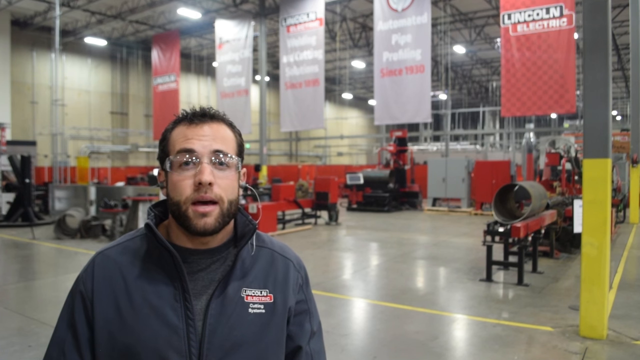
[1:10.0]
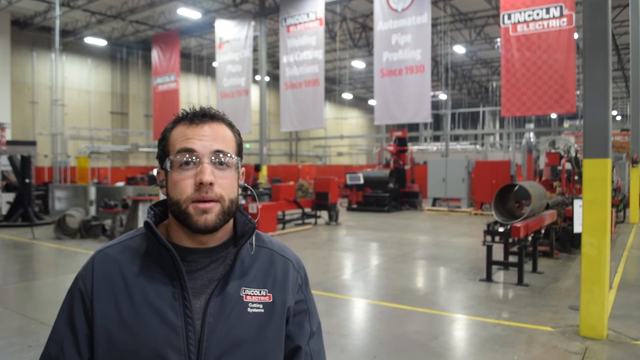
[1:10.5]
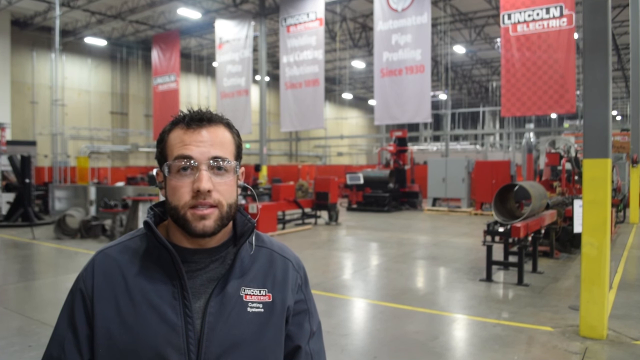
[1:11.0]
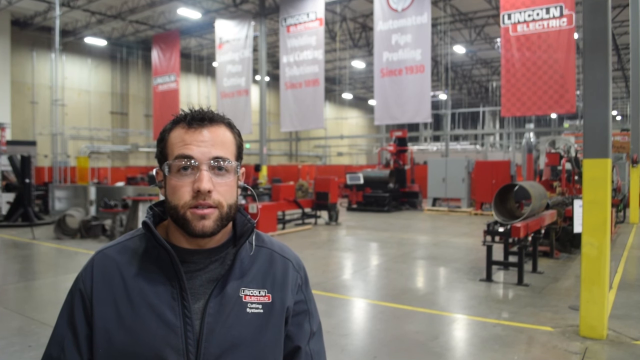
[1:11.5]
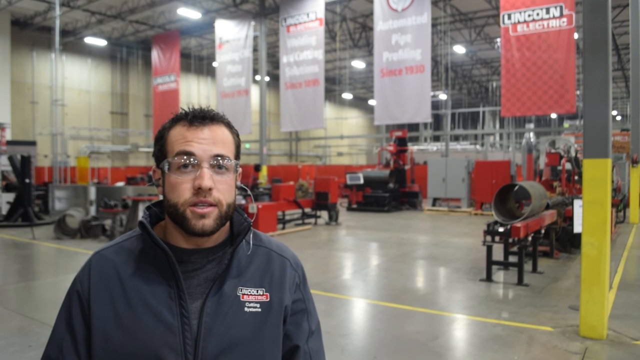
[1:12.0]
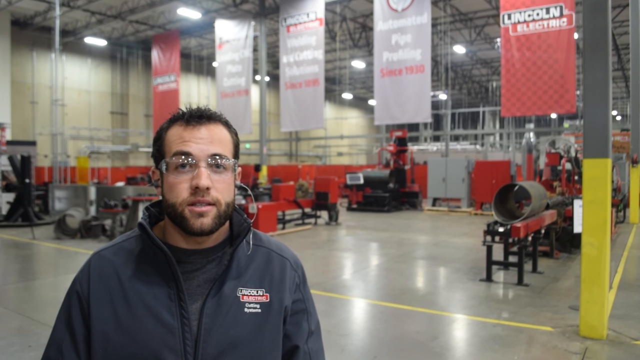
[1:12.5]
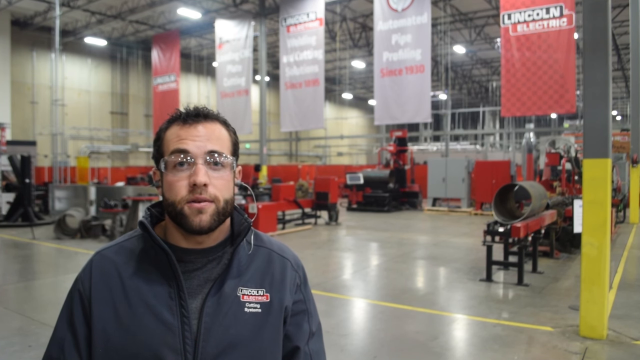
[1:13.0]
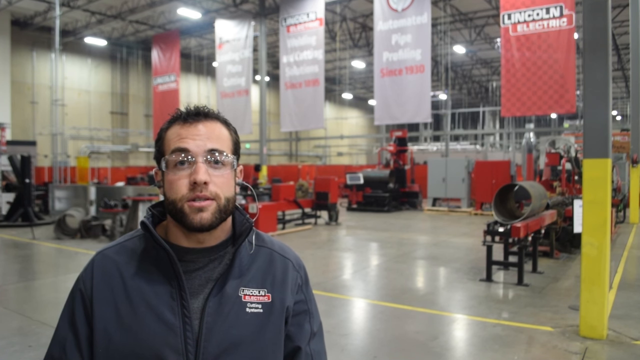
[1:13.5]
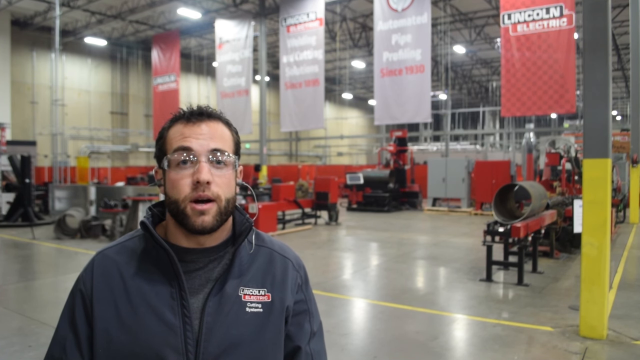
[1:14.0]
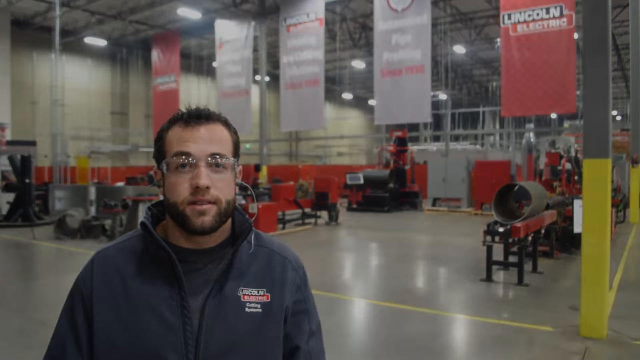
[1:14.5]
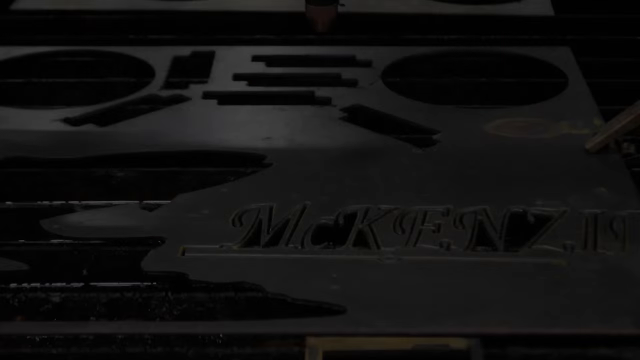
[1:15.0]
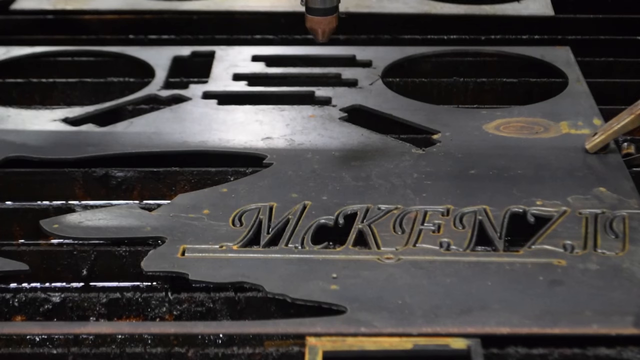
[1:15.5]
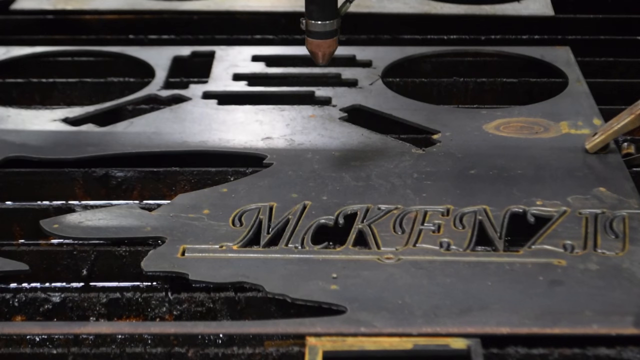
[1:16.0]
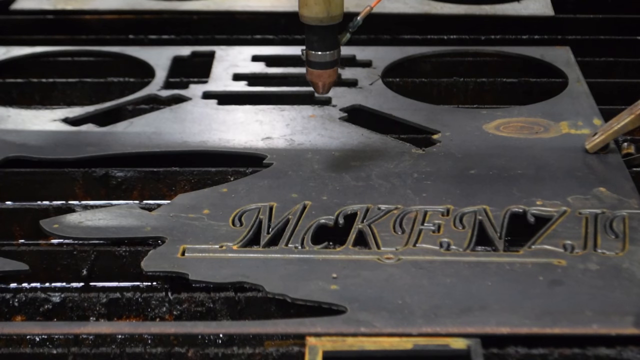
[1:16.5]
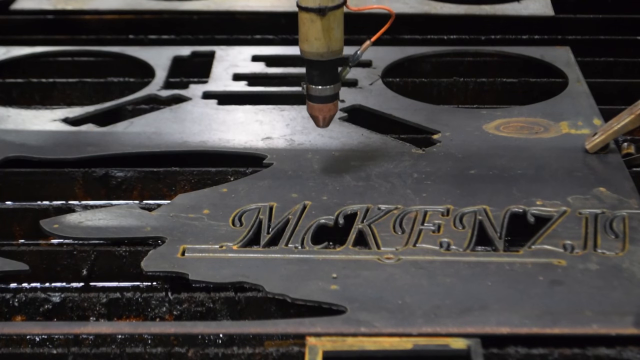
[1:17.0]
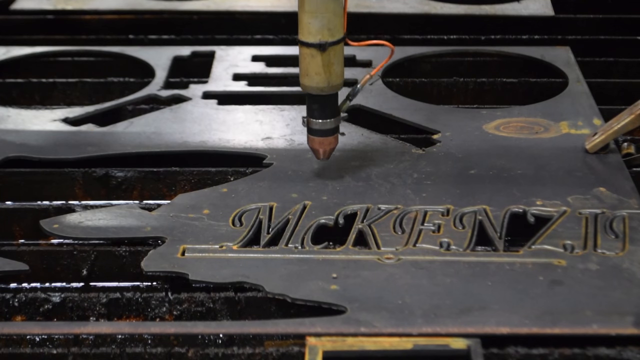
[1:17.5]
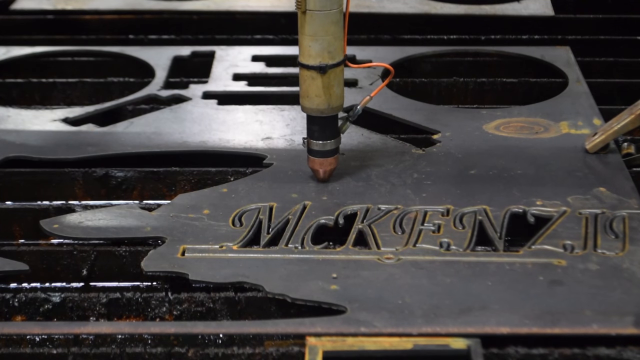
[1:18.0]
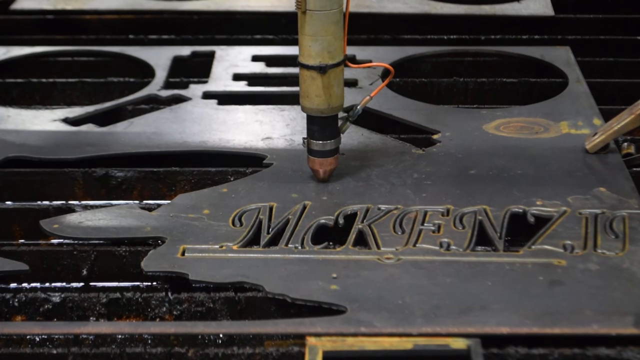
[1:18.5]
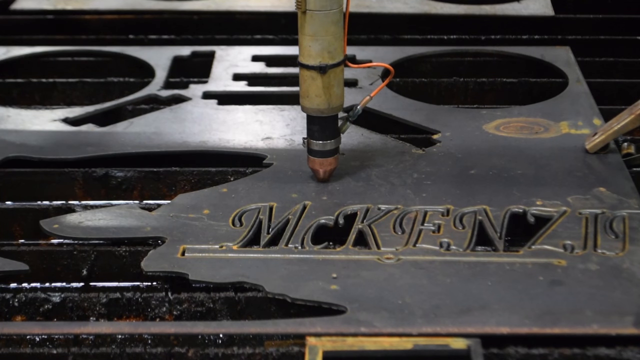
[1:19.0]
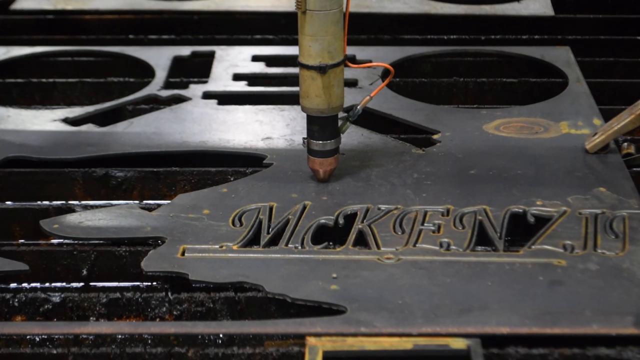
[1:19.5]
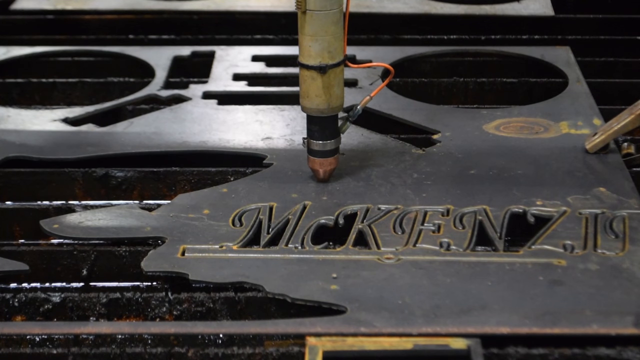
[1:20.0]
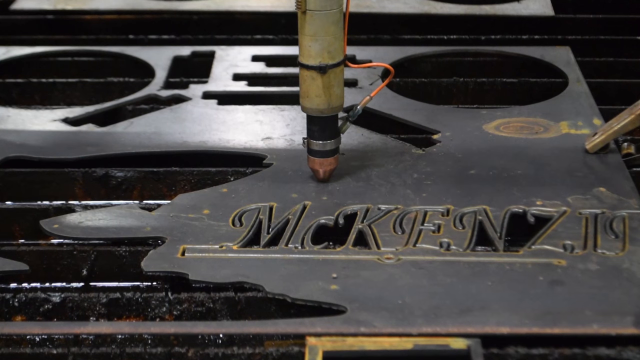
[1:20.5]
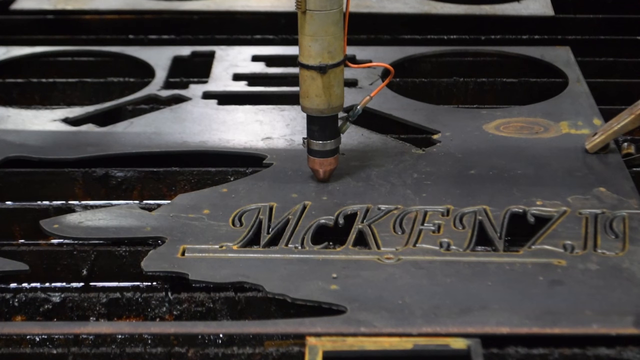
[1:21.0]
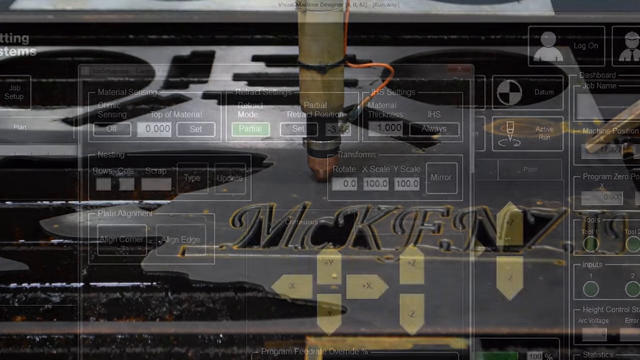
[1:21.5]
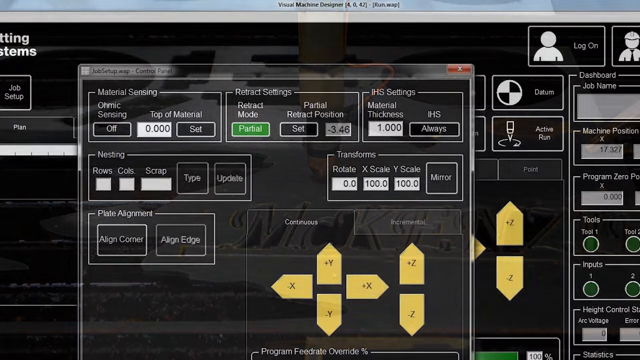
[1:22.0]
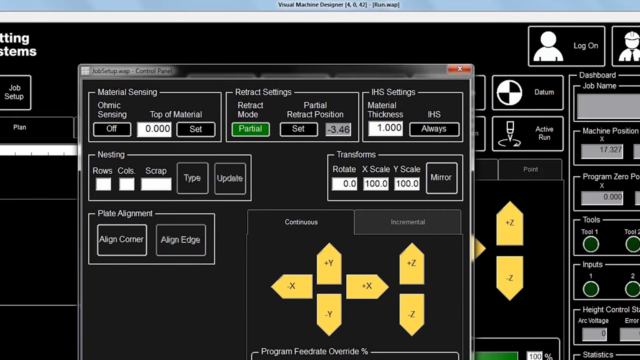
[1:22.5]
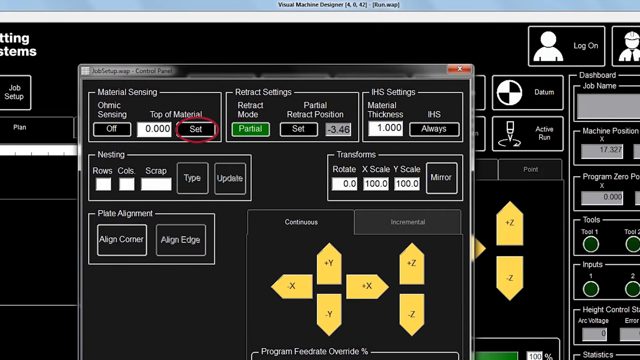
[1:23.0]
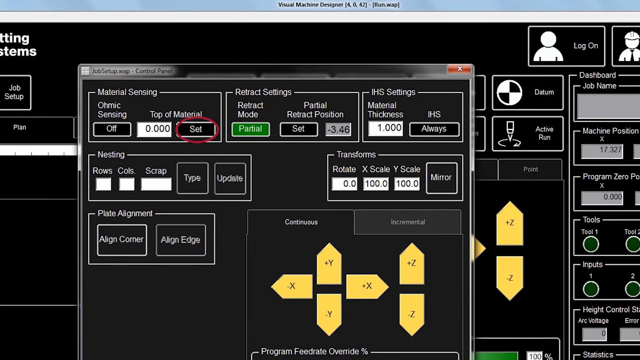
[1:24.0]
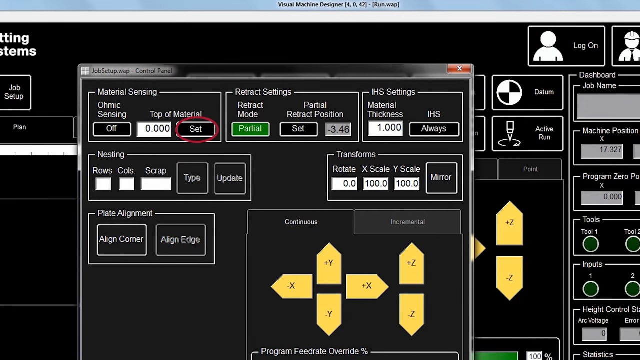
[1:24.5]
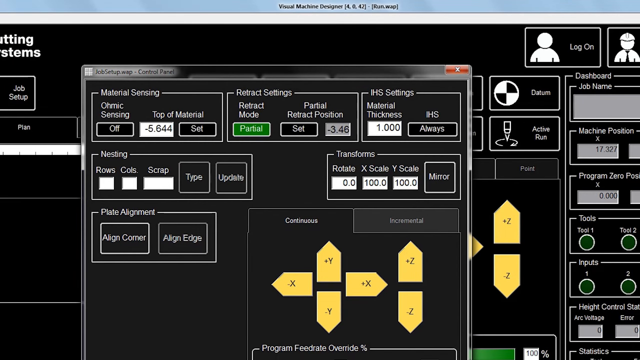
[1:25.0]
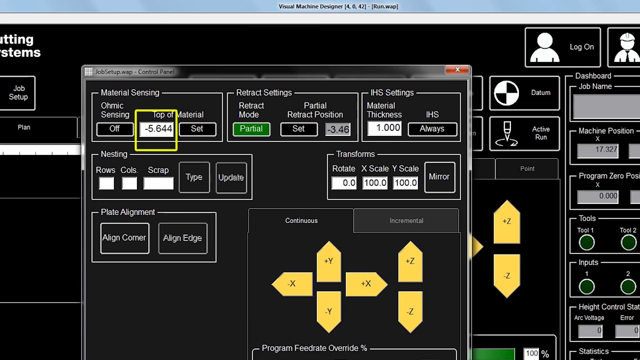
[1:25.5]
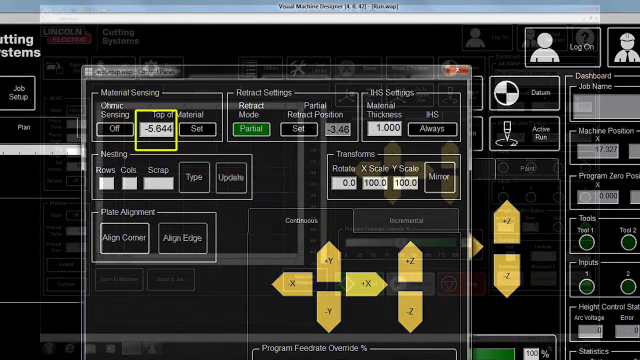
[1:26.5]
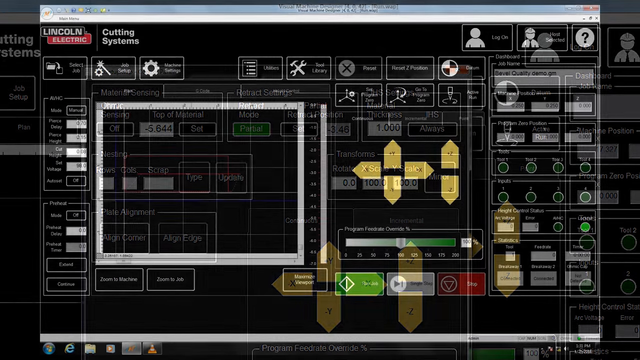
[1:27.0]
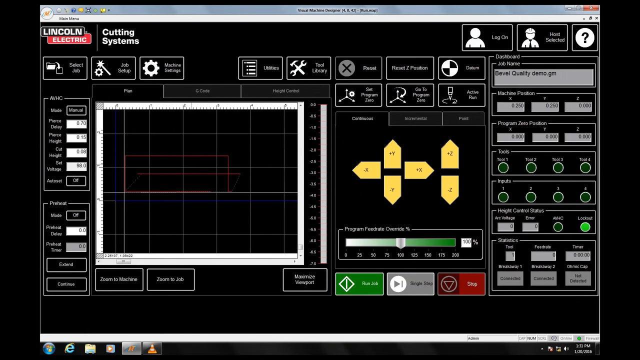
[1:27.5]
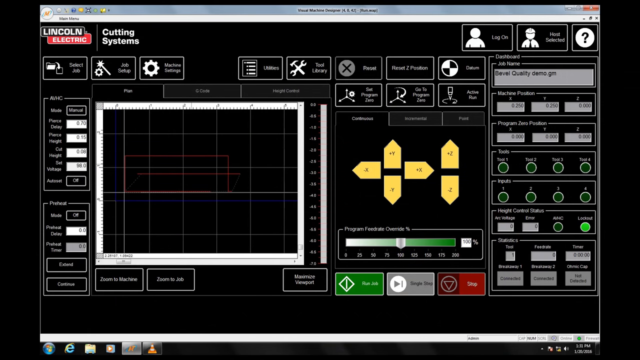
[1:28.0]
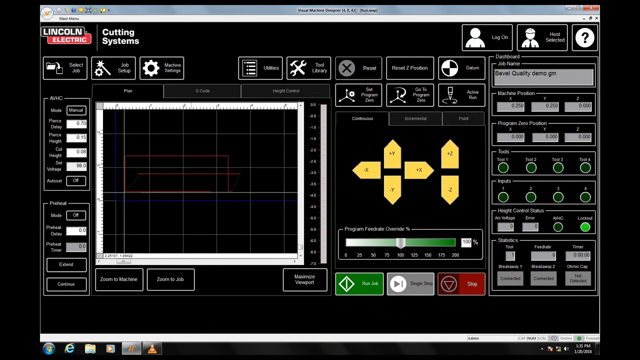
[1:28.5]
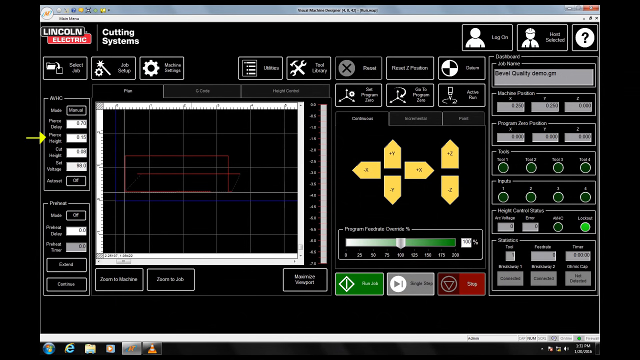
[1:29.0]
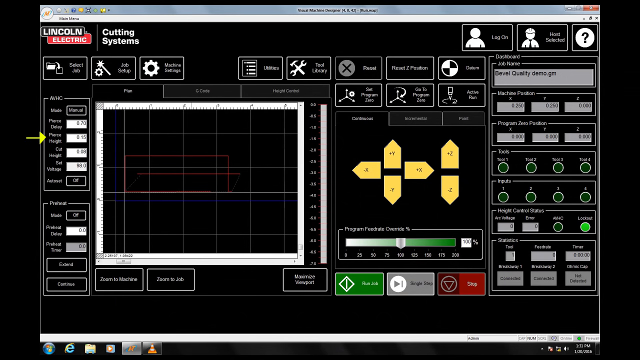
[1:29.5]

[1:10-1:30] Mark Humphries is talking. The iron seen earlier comes down to stand on the flat iron. A system screen shows "job setup", "material sensing", "top of material" and "set", then "retract settings" and "retract mode", with a green box beneath reading "partial", and "rows", "columns" and "scrap". Something is clicked and two yellow arrows are shown briefly. The flat iron where the iron landed has "McKenzie" written on it, spelled M-C-K-E-N-Z-I. After the iron from above lands on the flat iron, it stops there. Mark Humphries is talking in the warehouse, with about five digital banners behind him, two red and three gray.